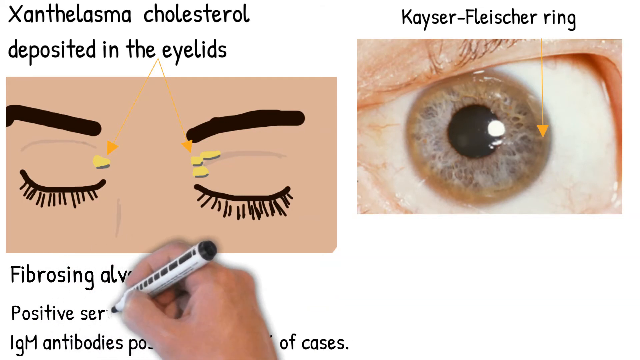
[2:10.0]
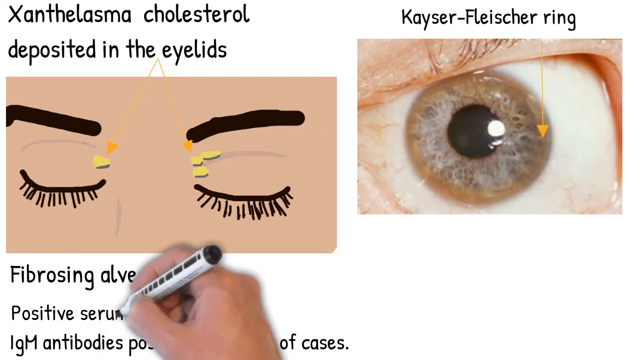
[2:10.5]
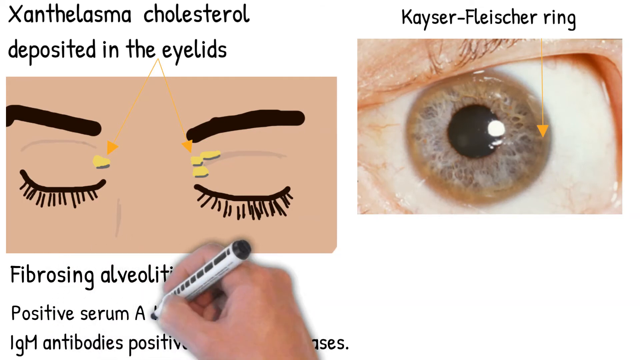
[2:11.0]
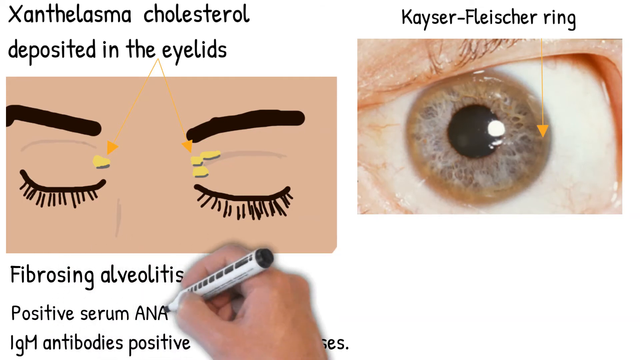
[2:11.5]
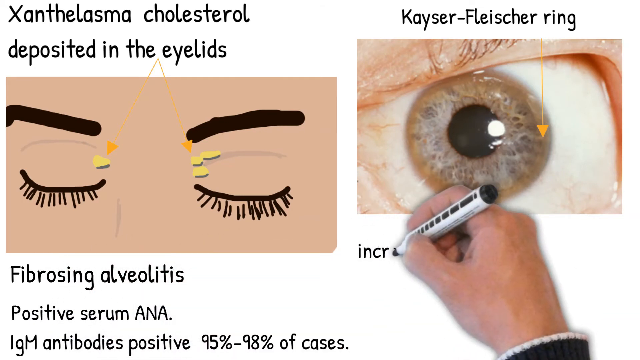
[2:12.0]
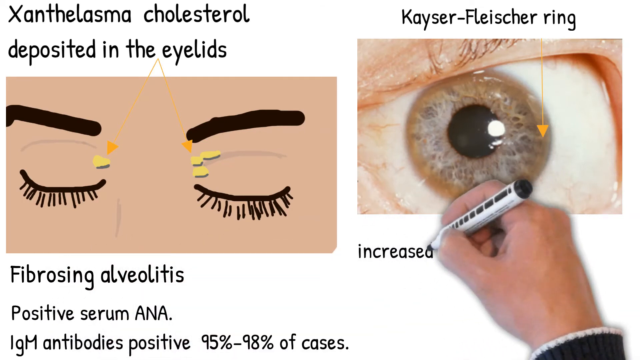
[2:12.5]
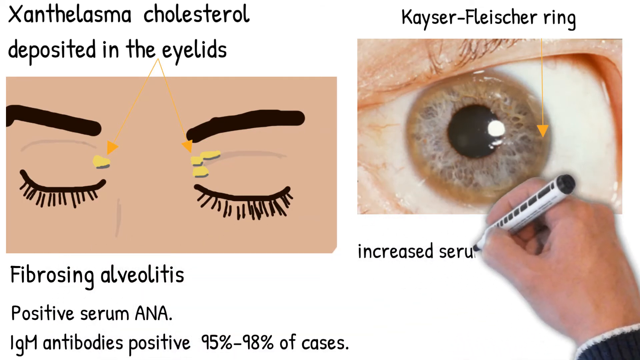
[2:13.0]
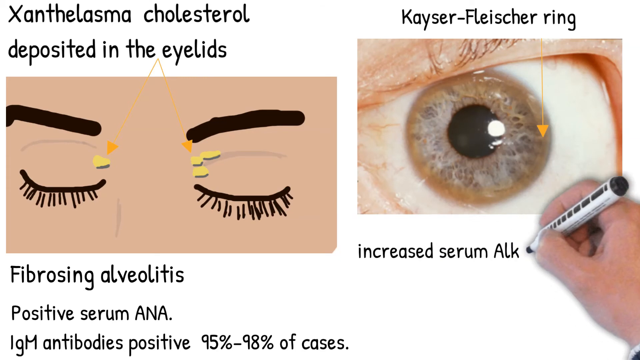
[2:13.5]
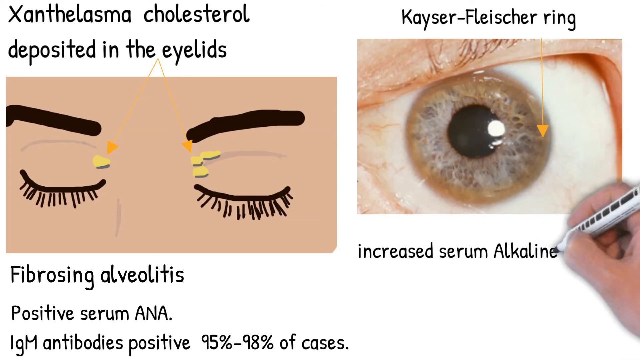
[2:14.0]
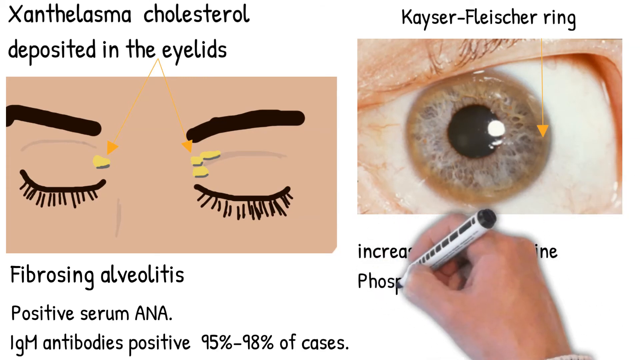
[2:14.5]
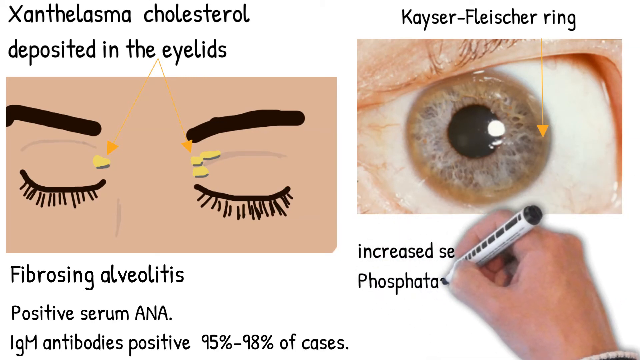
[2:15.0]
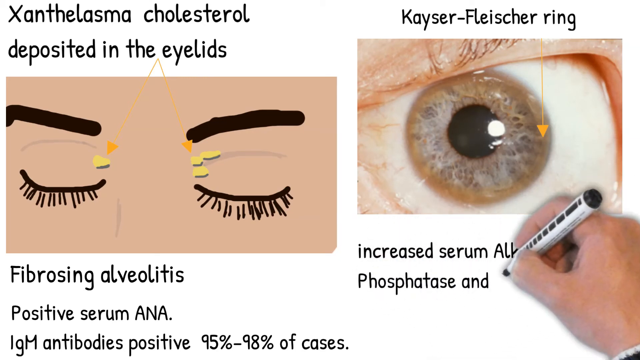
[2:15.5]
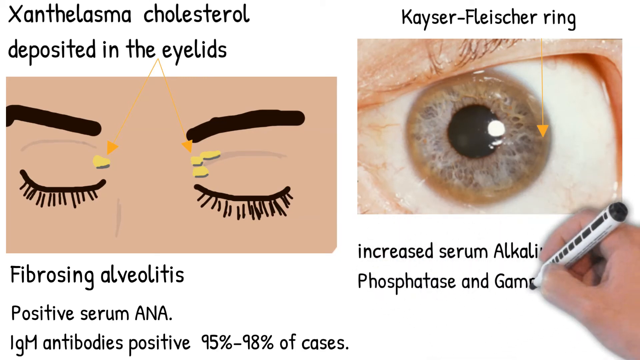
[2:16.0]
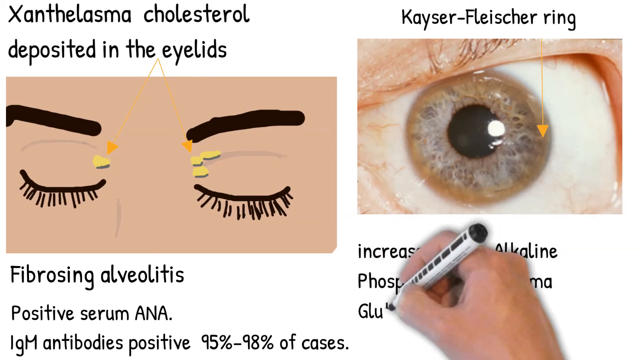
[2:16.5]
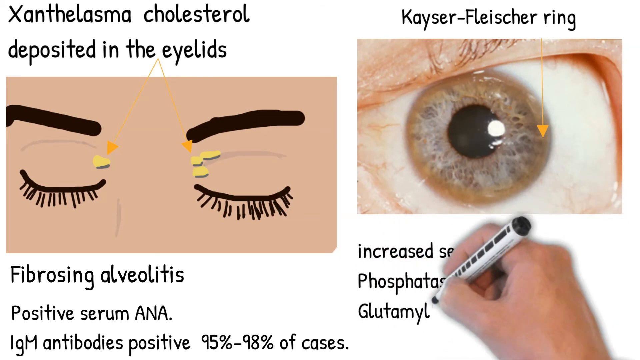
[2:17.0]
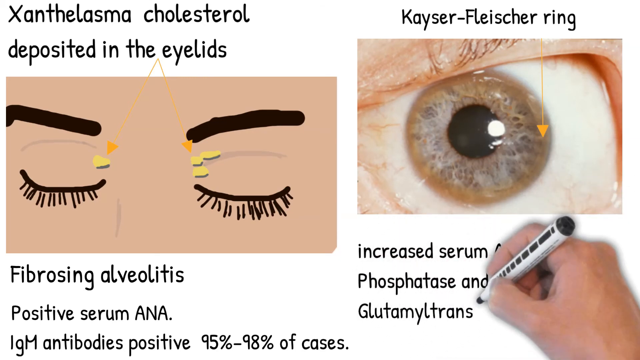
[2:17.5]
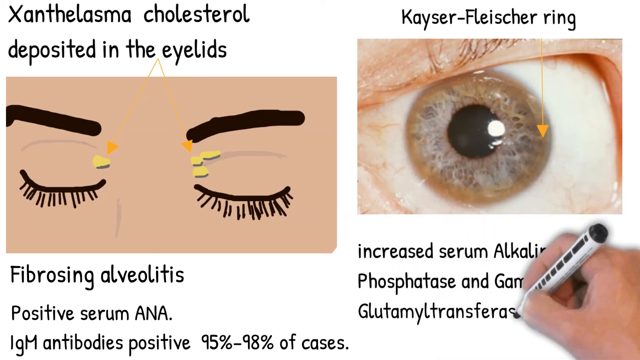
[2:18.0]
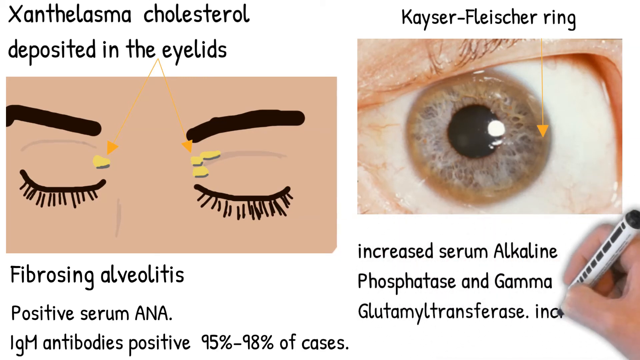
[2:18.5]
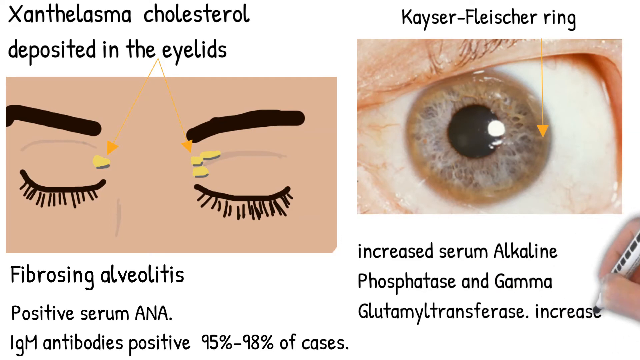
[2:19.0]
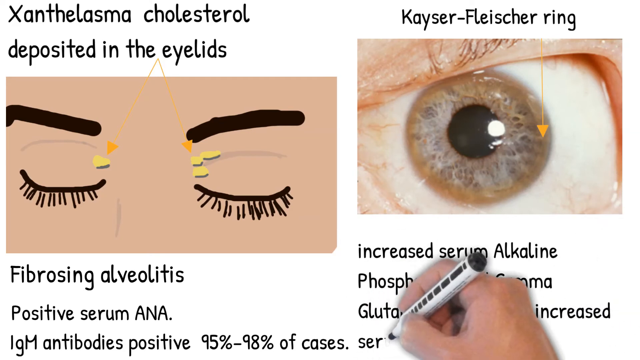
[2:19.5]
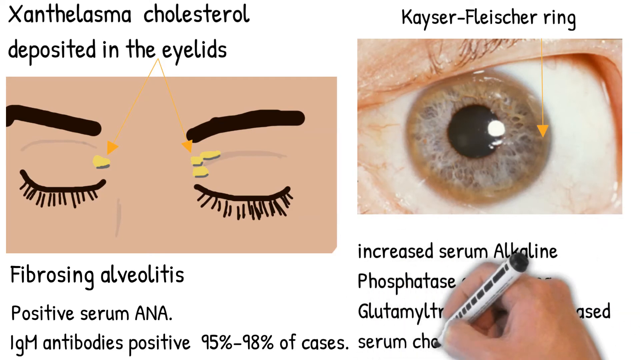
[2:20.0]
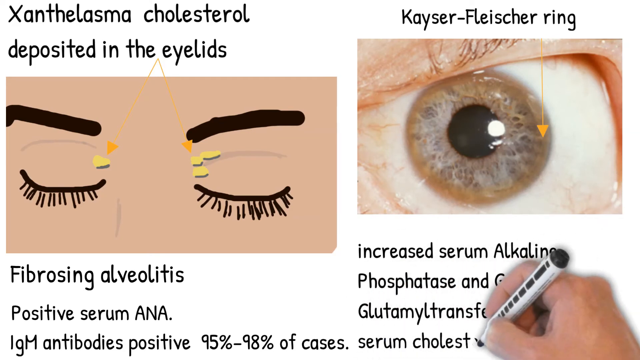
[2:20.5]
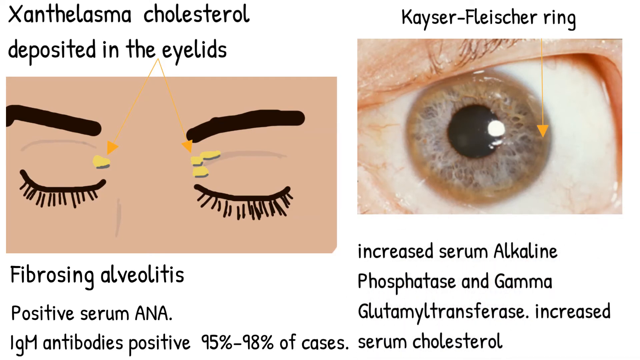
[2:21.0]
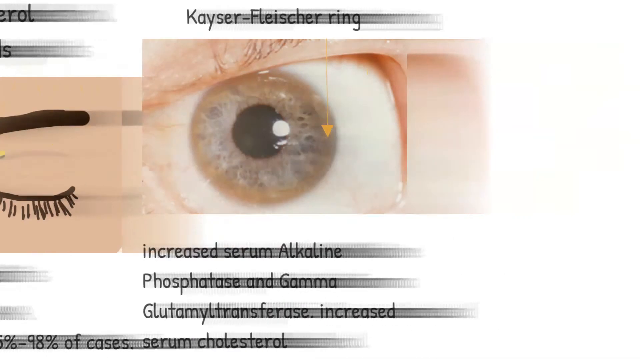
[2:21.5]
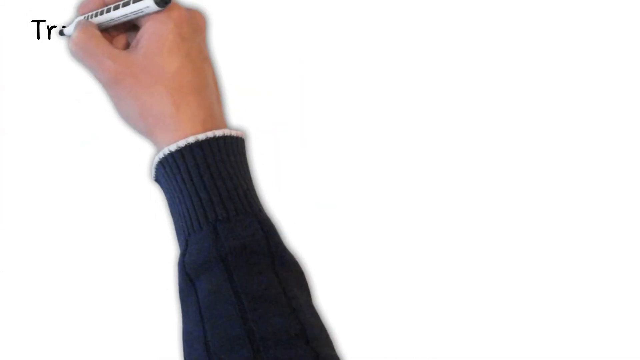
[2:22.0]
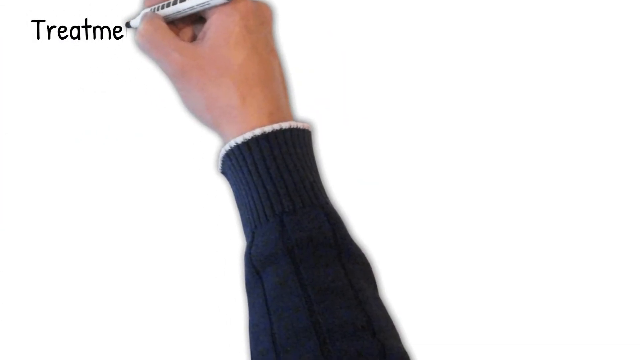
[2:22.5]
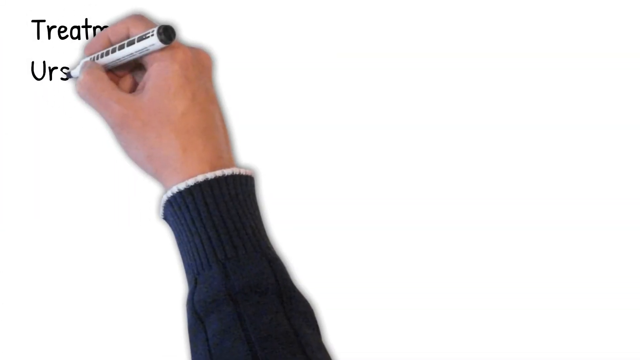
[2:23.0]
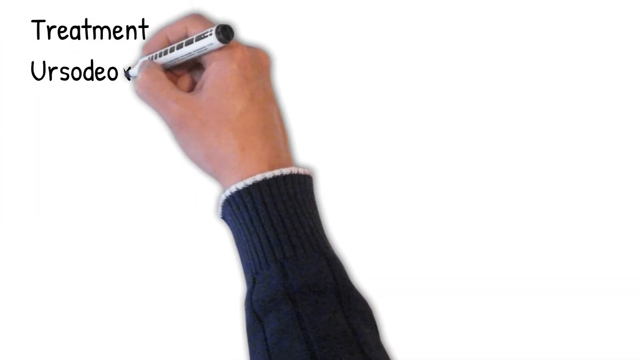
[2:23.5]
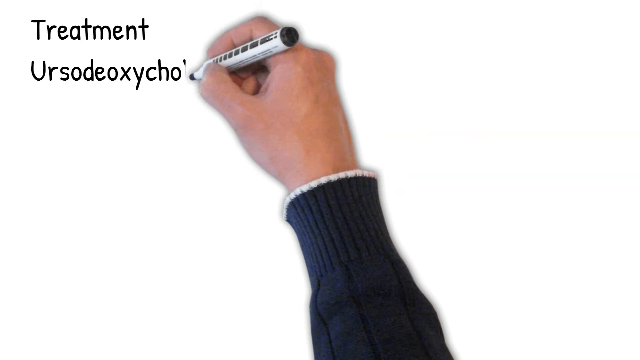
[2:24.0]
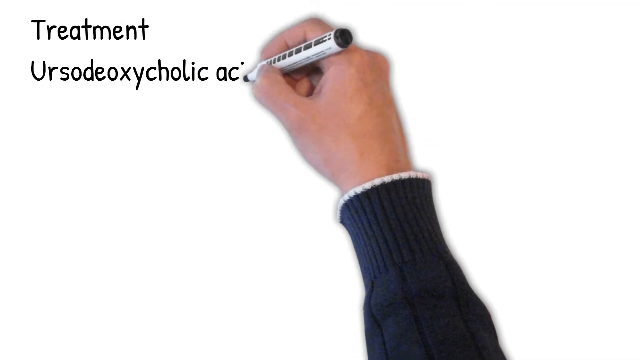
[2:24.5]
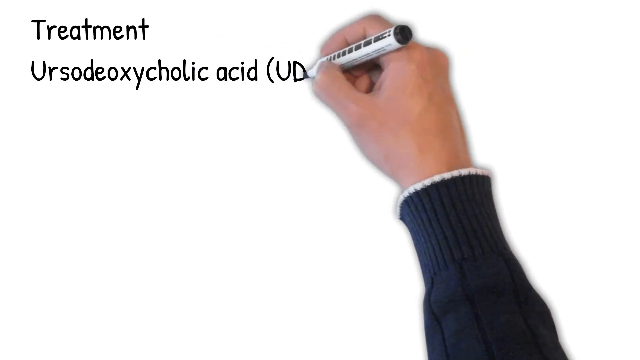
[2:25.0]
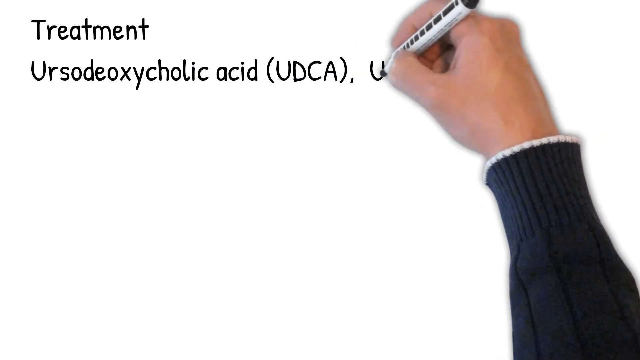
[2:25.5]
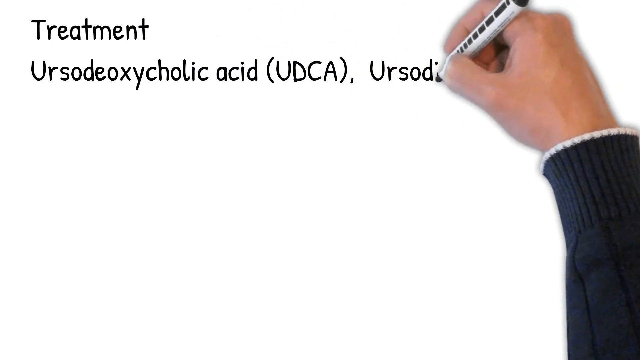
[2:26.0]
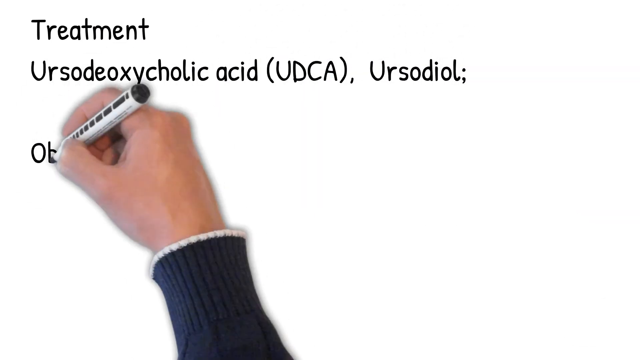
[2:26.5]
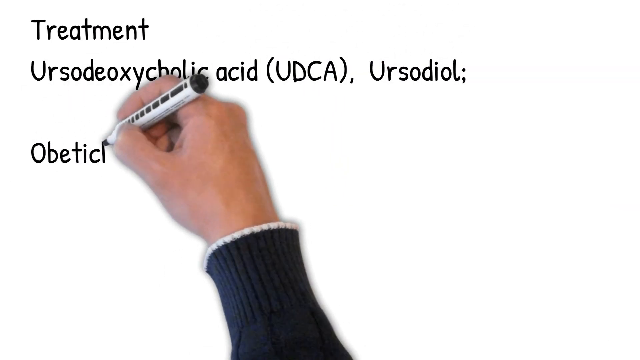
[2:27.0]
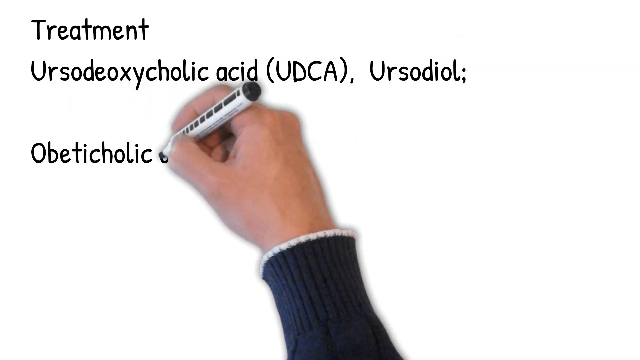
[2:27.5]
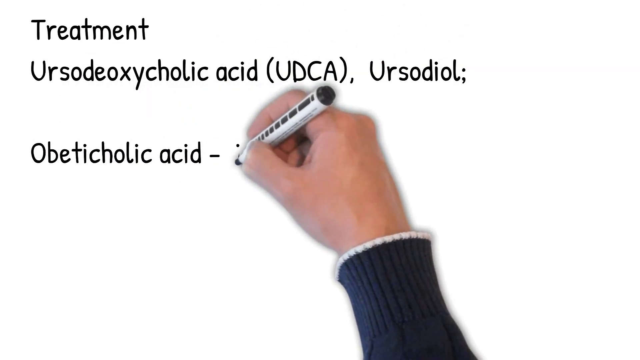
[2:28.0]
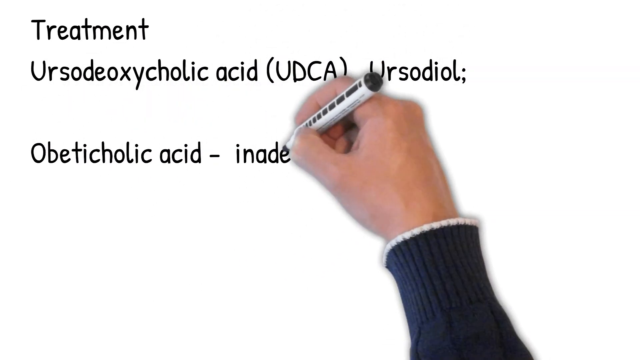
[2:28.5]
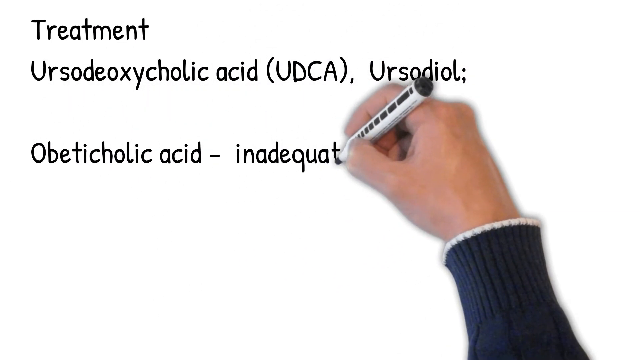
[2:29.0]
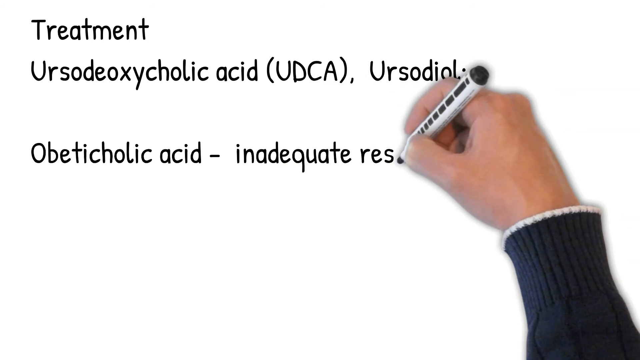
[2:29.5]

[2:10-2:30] A Caucasian male's right hand draws pictures on a whiteboard. He wears a long-sleeved dark charcoal gray sweater with a thin band of white around the edge of the sleeve at the wrist and holds a white marker with black text and a black end. He draws a Caucasian female's eyes with brown eyelashes and brown eyebrows, showing fatty deposits around the inner lids of the eyelids. In the upper left corner, black text reads "xanthelasma cholesterol deposited in the eyelids", with arrows pointing down at the deposits. Beneath the image, black text reads "fibrosing alveolitis positive serum ANA". To the right is a hazel left eye with "kaiser fleischer ring" written above it in black. Beneath that, black text reads "increased serum alkaline phosphatase".